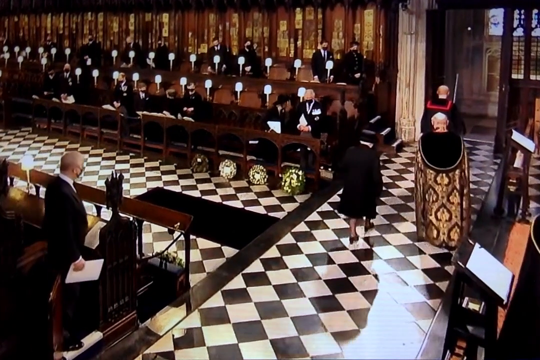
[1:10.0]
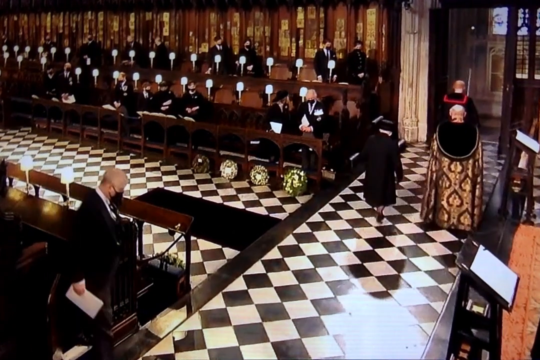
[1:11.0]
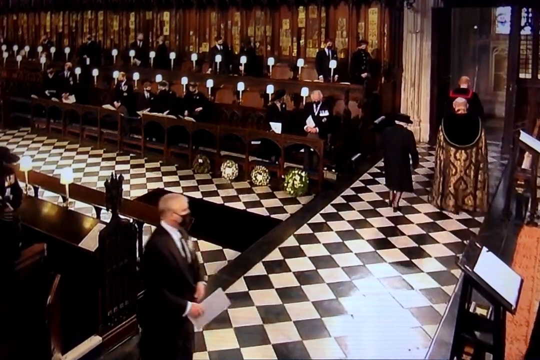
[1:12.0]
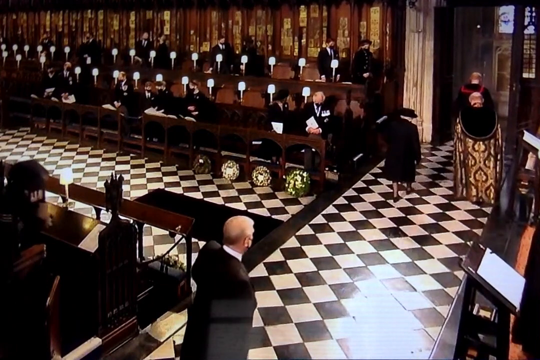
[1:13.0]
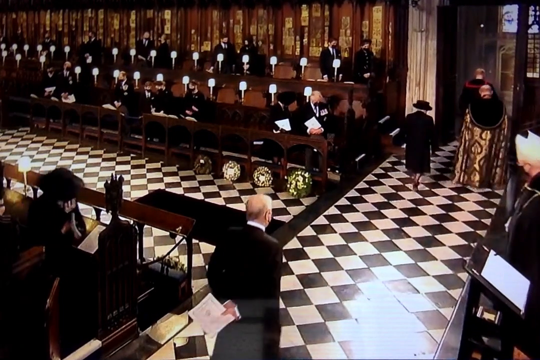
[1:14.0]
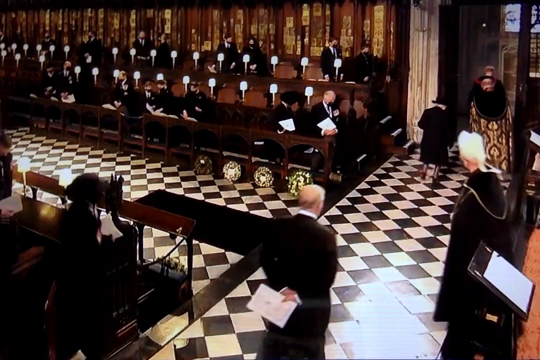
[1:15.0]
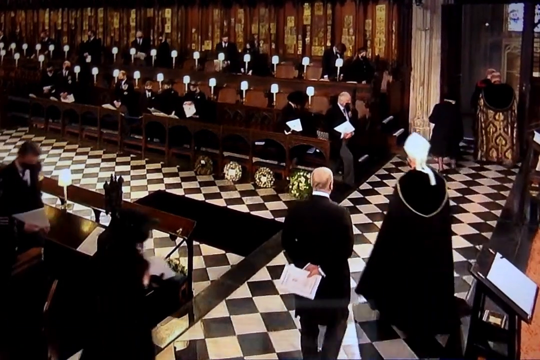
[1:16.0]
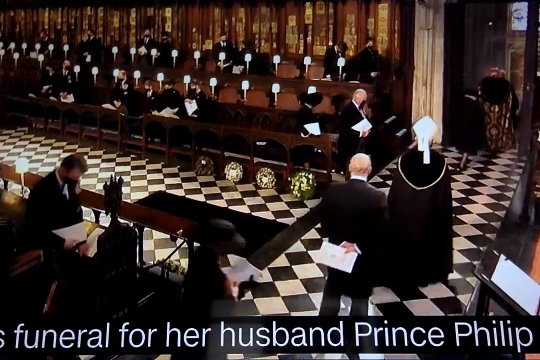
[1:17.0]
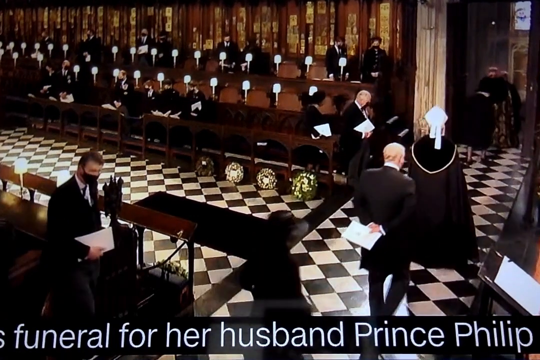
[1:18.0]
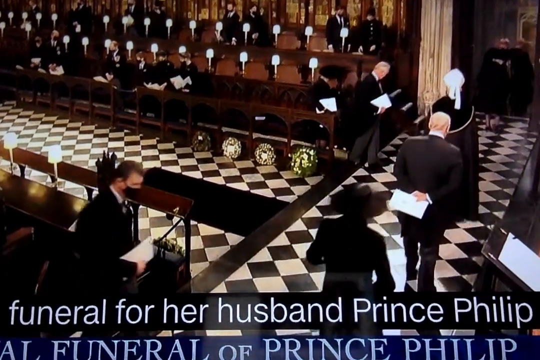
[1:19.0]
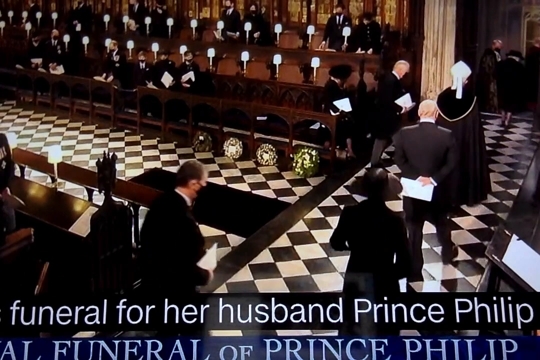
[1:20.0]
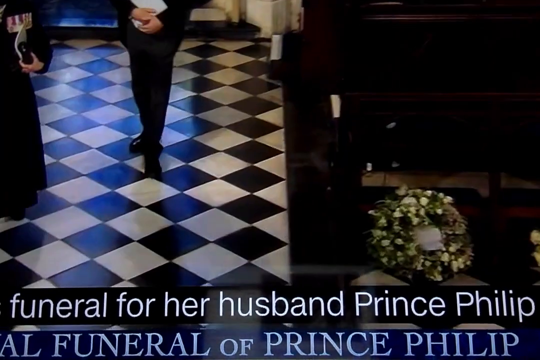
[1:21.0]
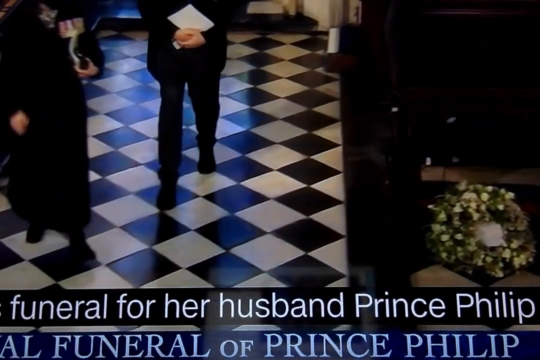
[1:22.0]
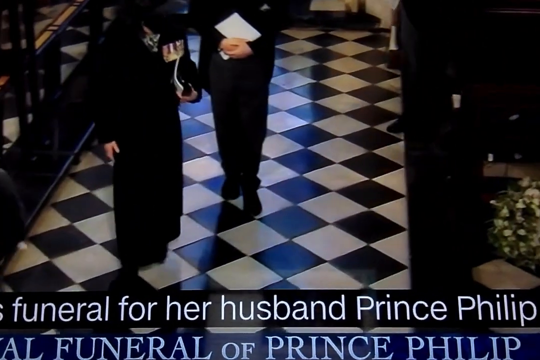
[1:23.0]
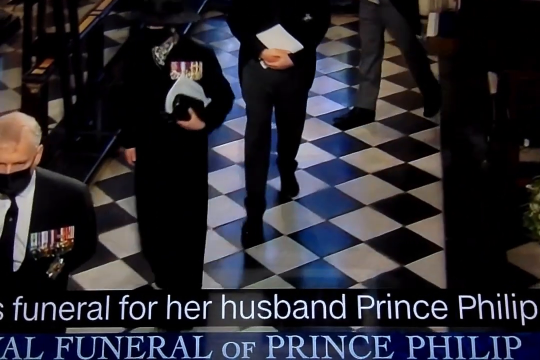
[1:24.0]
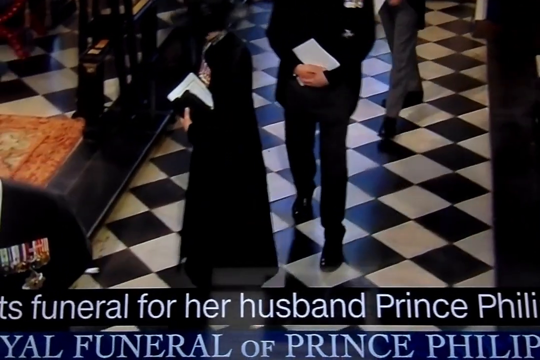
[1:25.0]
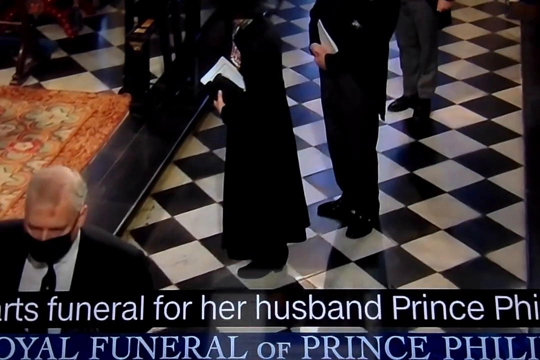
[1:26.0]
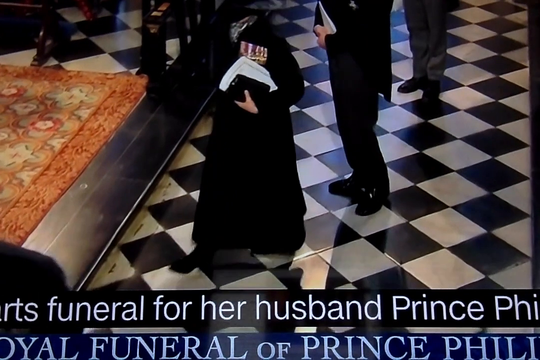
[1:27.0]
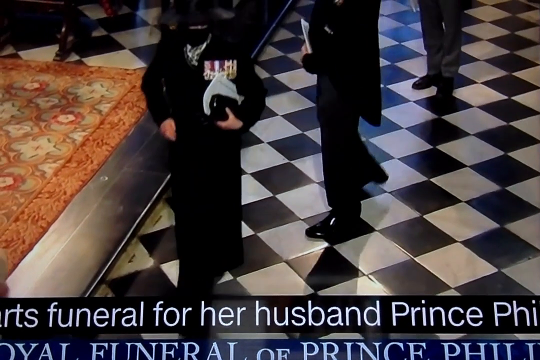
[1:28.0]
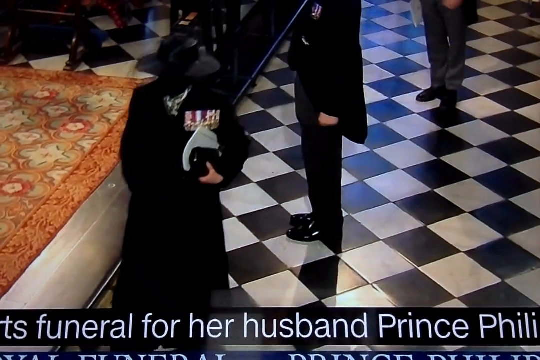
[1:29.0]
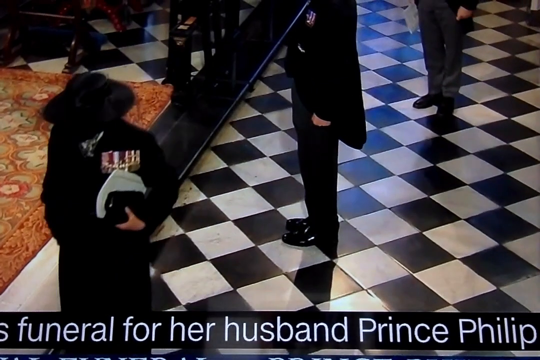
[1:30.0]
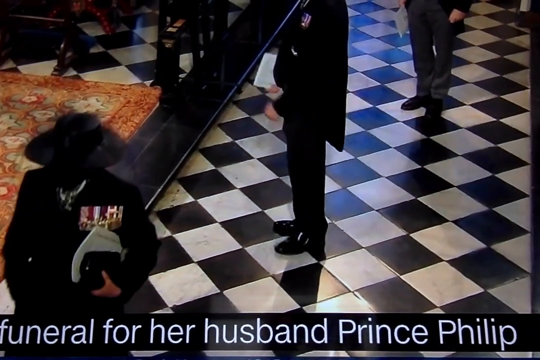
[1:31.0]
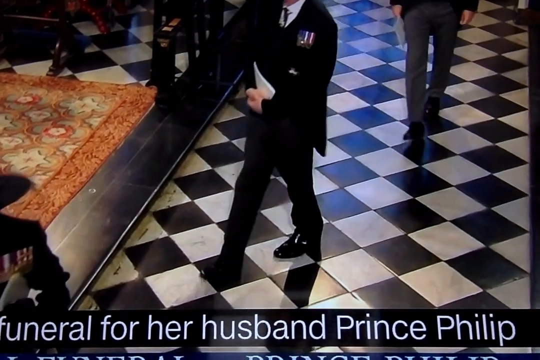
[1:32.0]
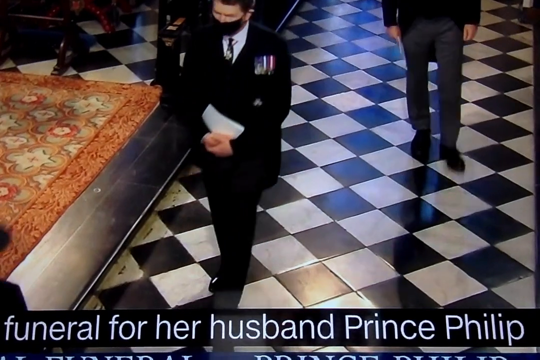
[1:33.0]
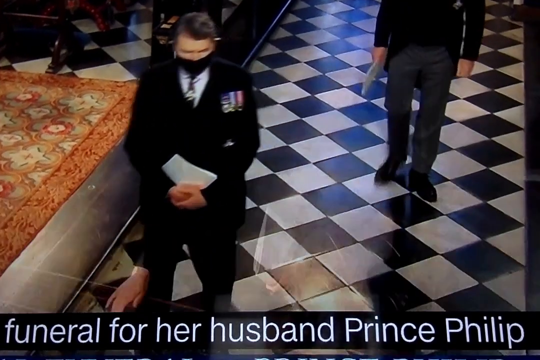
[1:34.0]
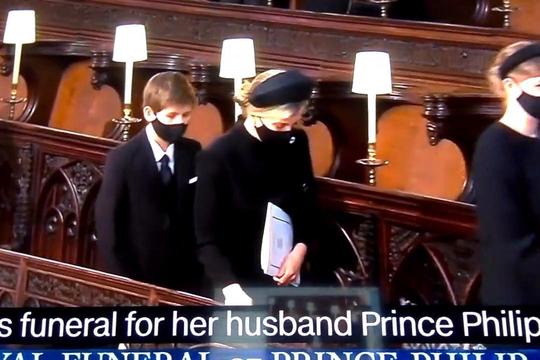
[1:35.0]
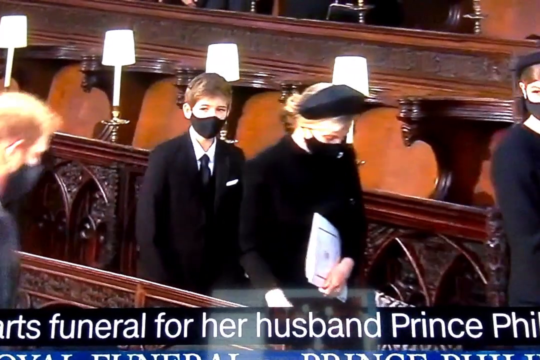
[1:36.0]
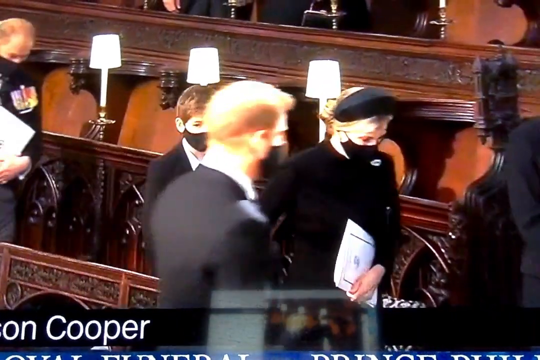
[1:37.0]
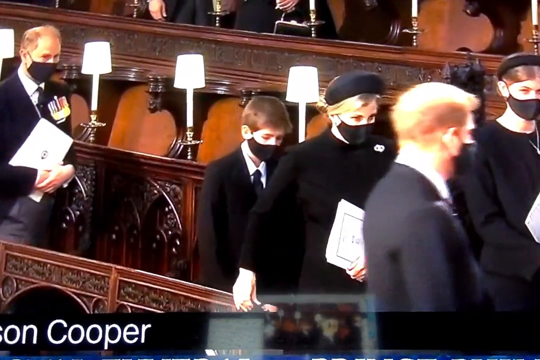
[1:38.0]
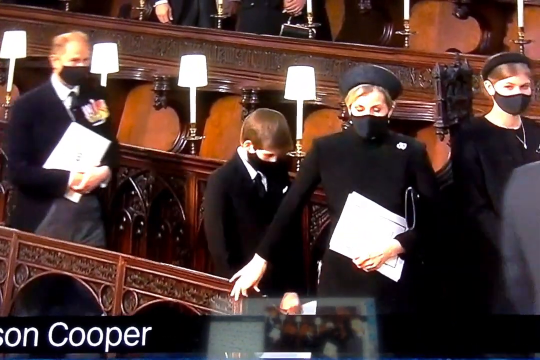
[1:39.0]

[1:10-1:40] People who seem to be on a stage walk out, and an exit is visible. On the left are rows of wooden benches with people sitting on them, all dressed in black, and there are lights on top of what look like tables. Another man in a black robe and a white hat walks up to the stage, followed by people all dressed in black suits, one of them wearing a black hat; they seem to be holding books with papers inside them. The floor is checkered white and black. The video then cuts to people walking out of the aisles and heading towards the front of the church.